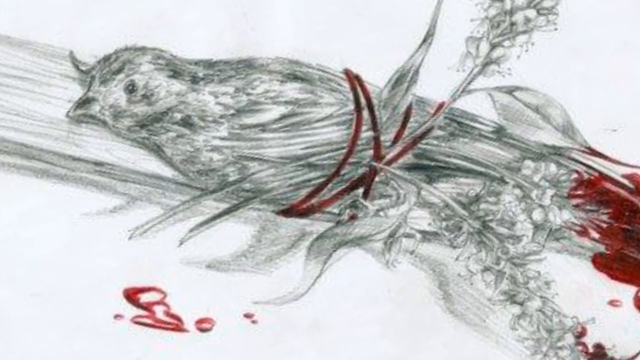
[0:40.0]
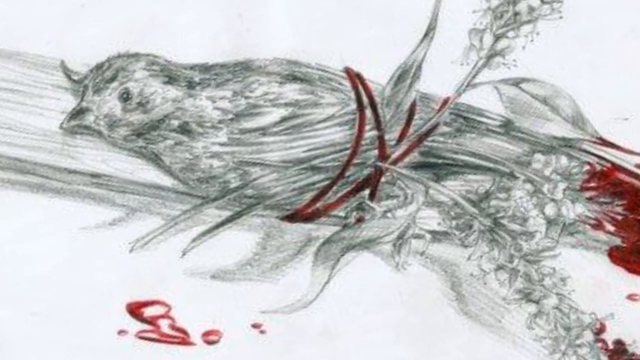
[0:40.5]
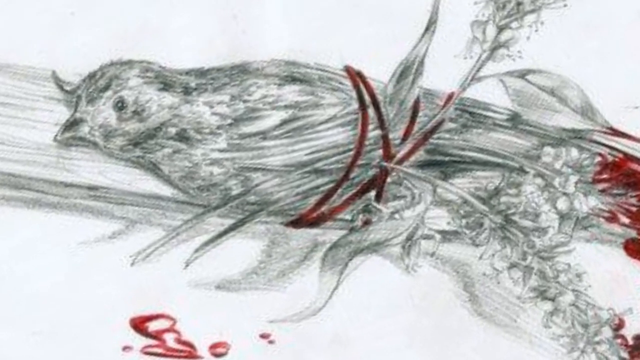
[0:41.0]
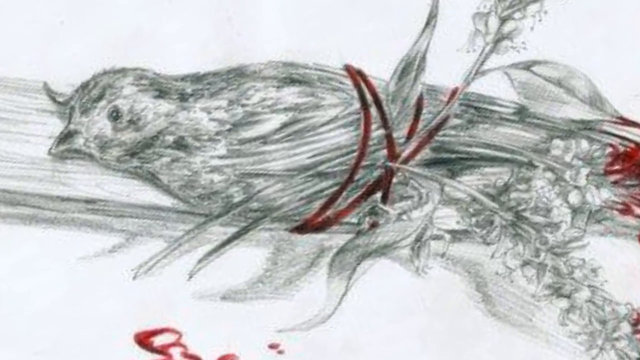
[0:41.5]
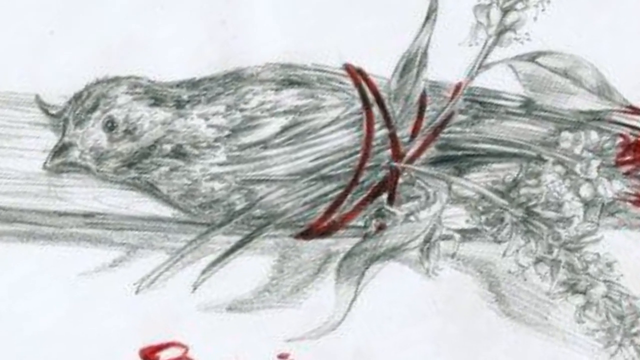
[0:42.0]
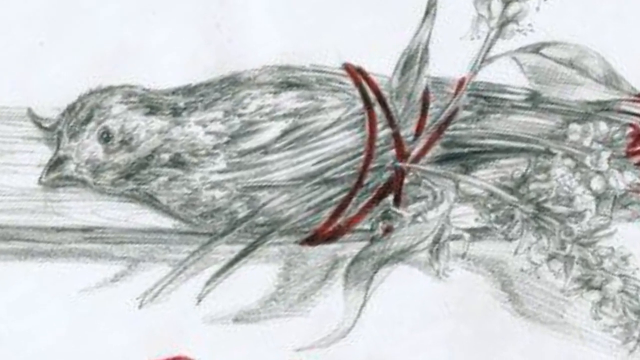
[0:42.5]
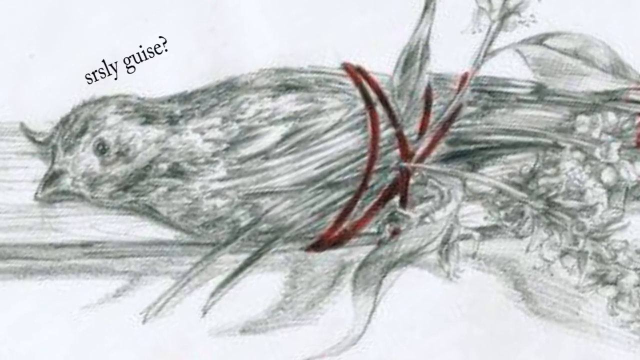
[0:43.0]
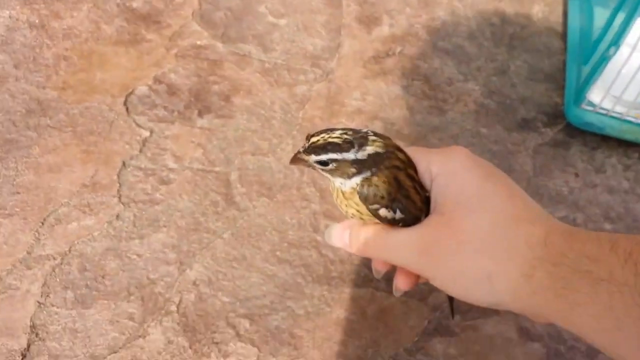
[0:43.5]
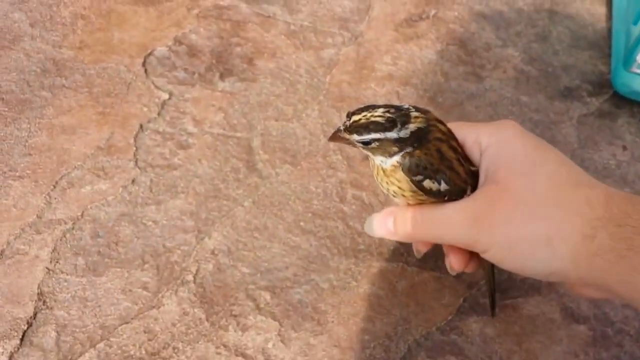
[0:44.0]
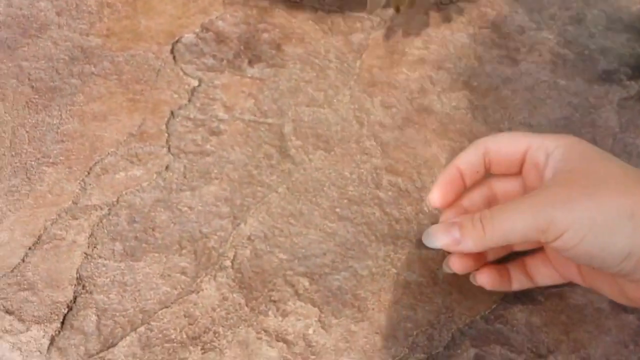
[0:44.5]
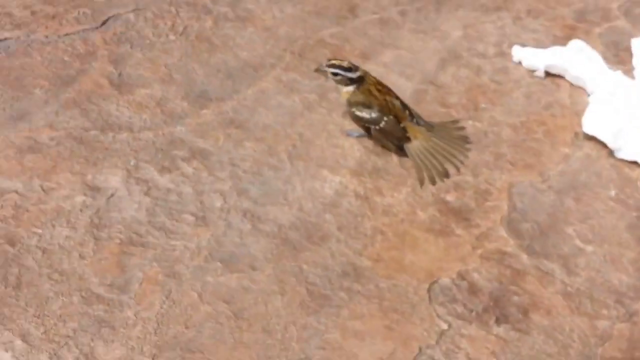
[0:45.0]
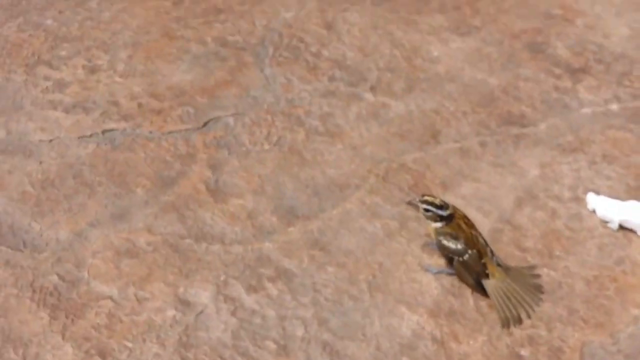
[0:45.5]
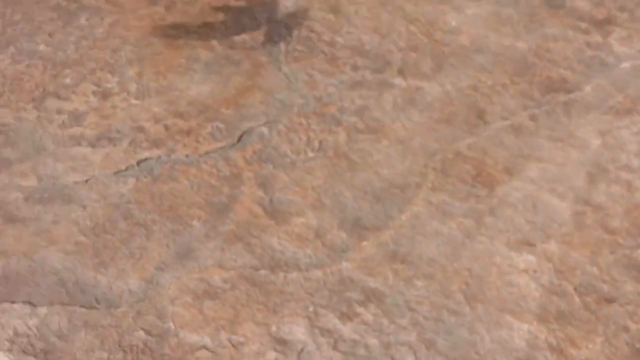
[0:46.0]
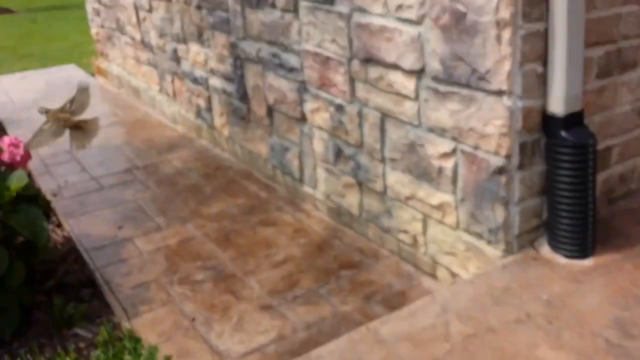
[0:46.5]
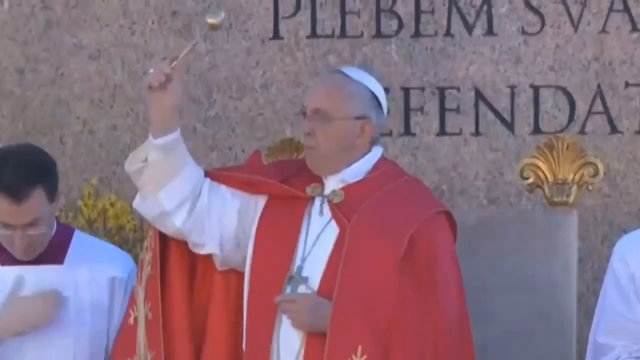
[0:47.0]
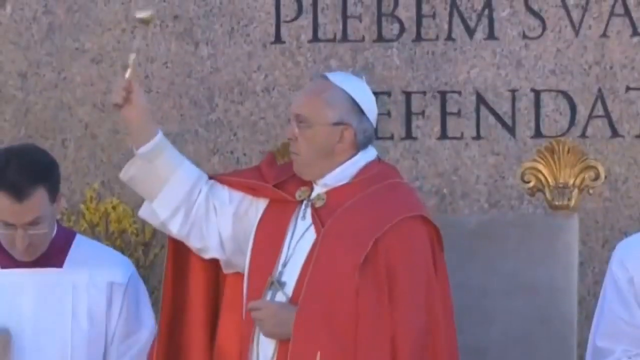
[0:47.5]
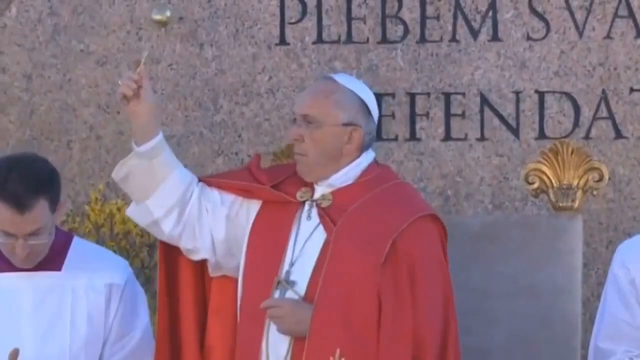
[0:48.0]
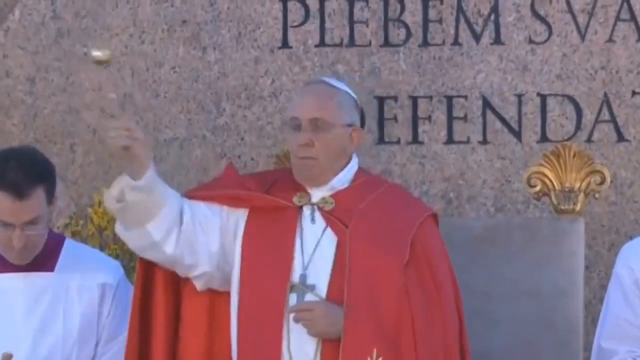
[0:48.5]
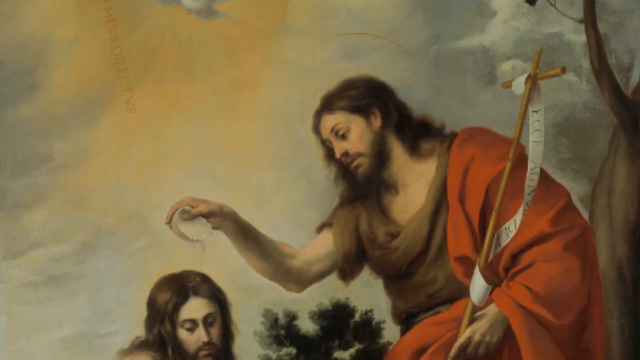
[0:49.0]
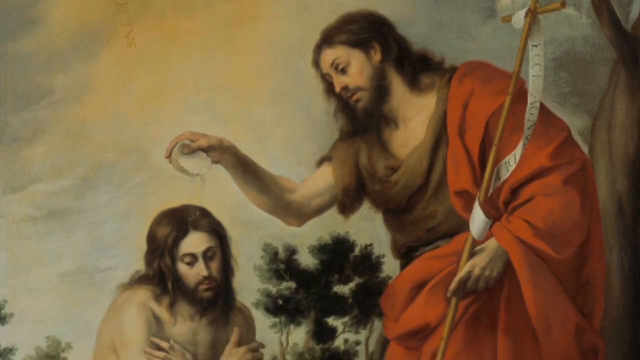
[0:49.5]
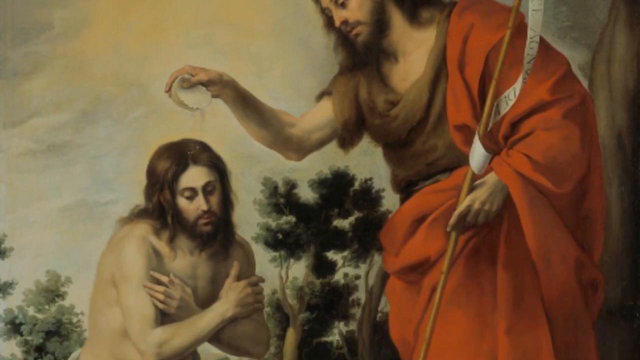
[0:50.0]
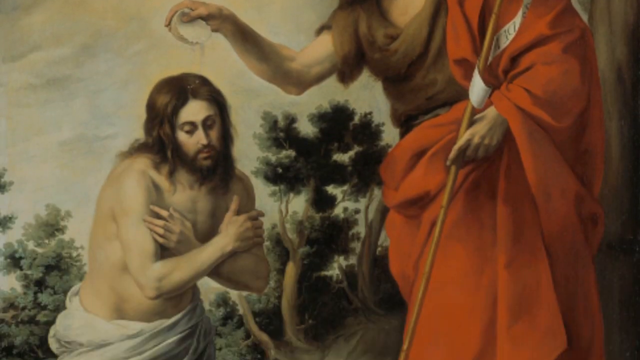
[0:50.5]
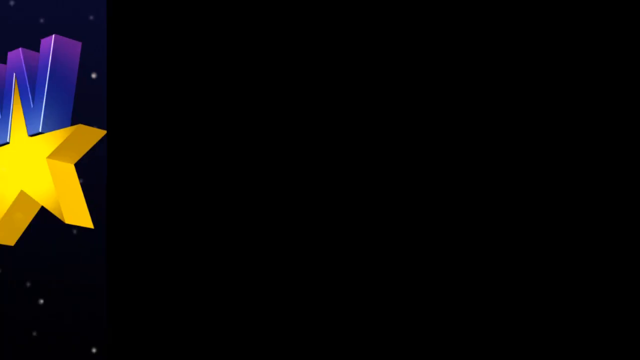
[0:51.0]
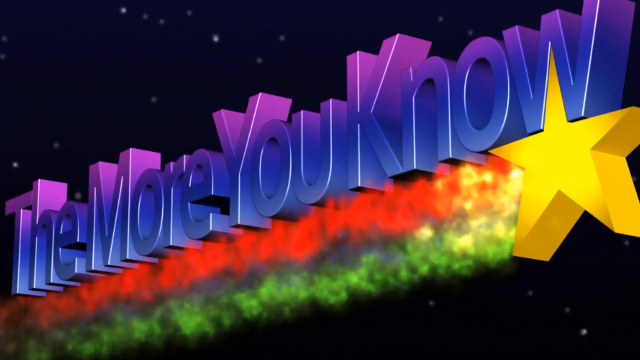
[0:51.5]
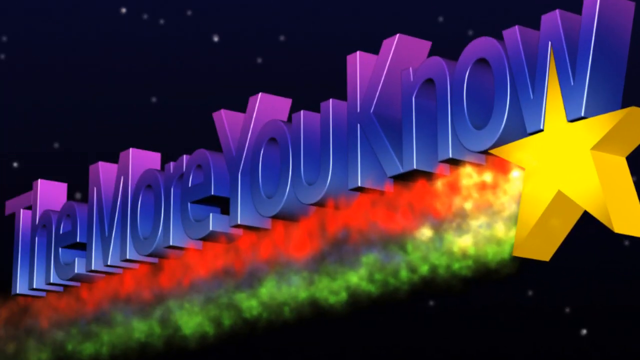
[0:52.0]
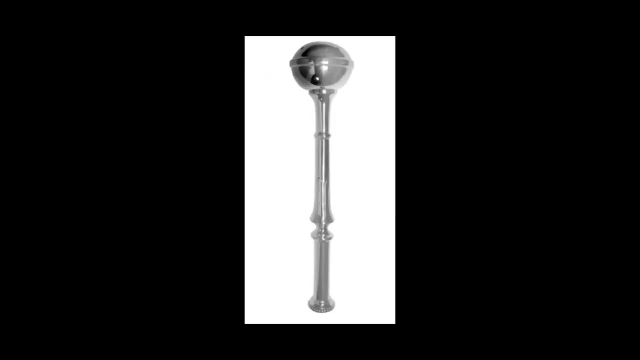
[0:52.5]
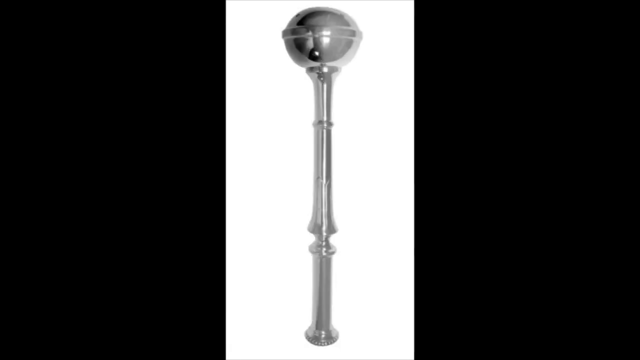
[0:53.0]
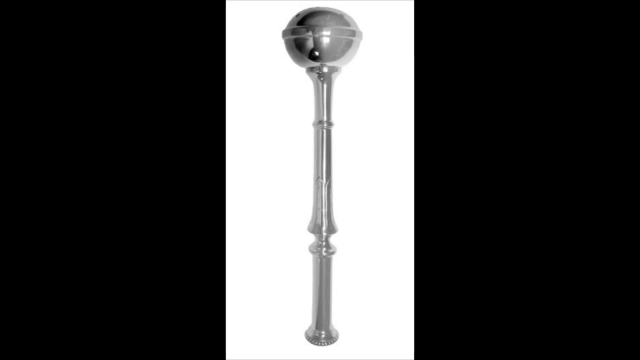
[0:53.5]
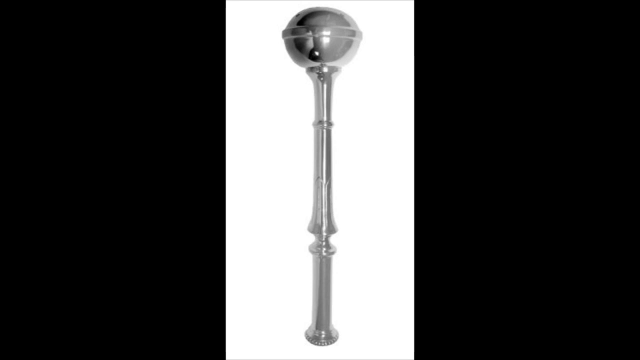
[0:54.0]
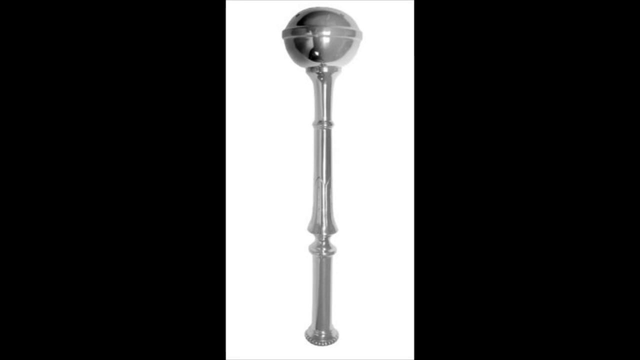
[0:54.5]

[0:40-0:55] The picture of the bird continues: it is a drawing of a bird tied with red string to some flowers and grass wreaths, with drops of blood at the bottom, and text says "seriously guys." A hand picks up a little bird, and the bird flies away. The video clip of the priest seen earlier appears, showing him in his red priestly garment and a little white hat, throwing water from the baby-shaker-looking item. A drawing of a man in a red robe, possibly Moses, shows him pouring oil onto someone. The words "now the more you know" come up with a star. Finally the baby-shaker-looking item is shown; it is silver.